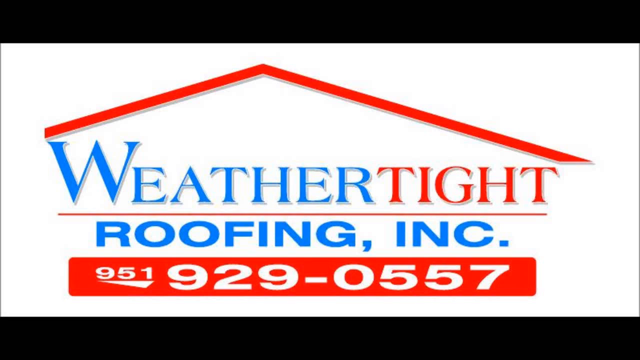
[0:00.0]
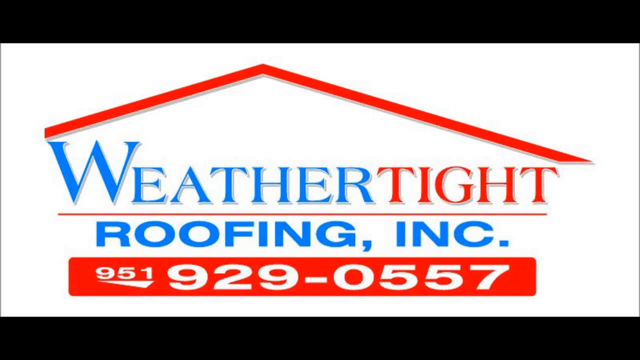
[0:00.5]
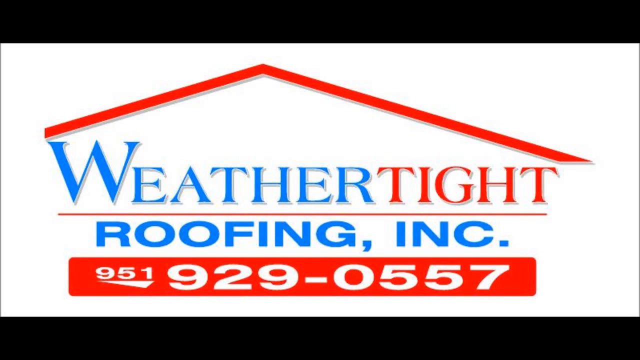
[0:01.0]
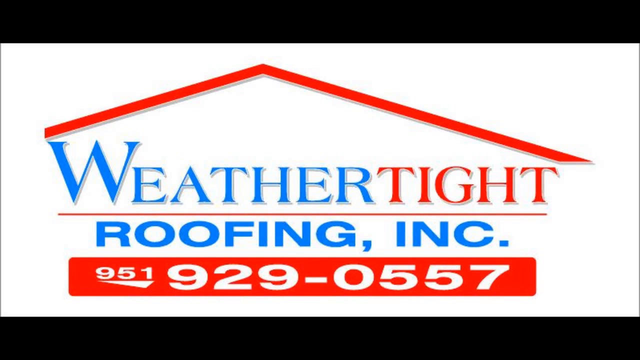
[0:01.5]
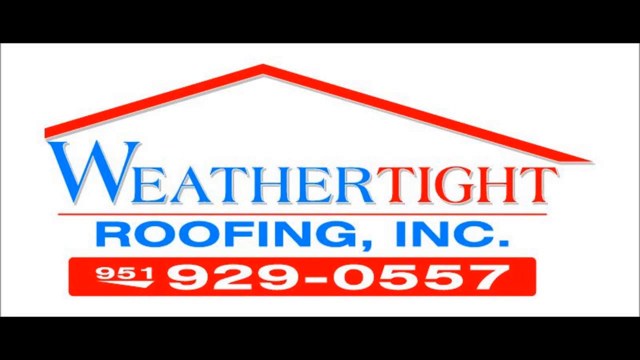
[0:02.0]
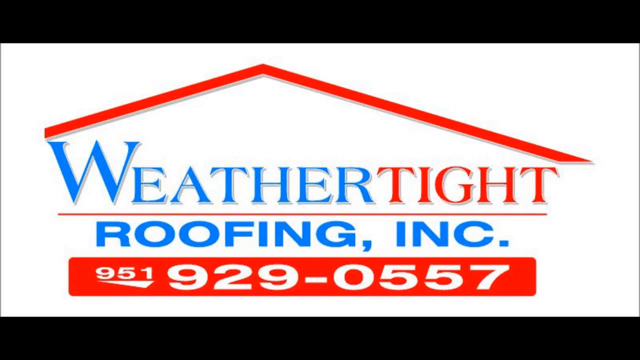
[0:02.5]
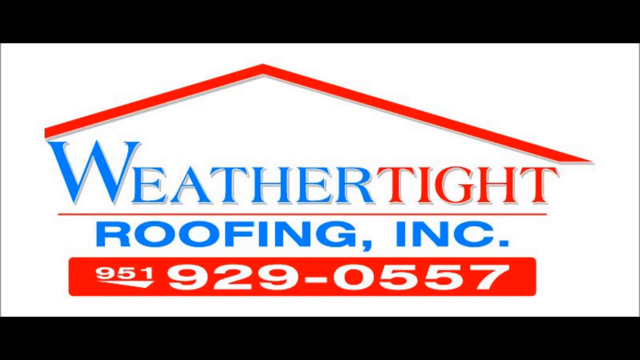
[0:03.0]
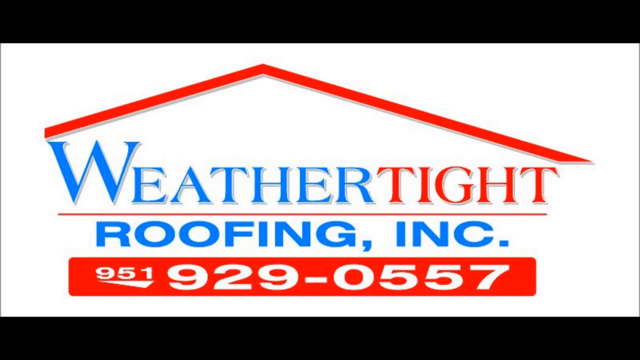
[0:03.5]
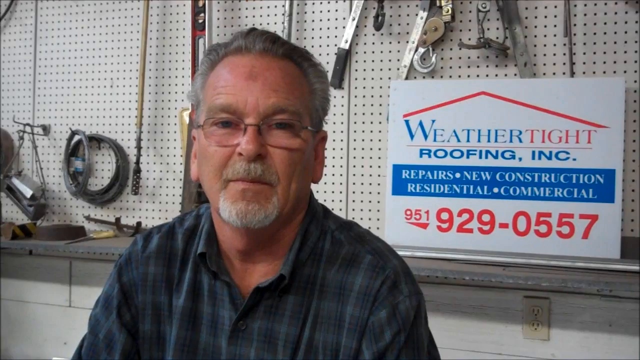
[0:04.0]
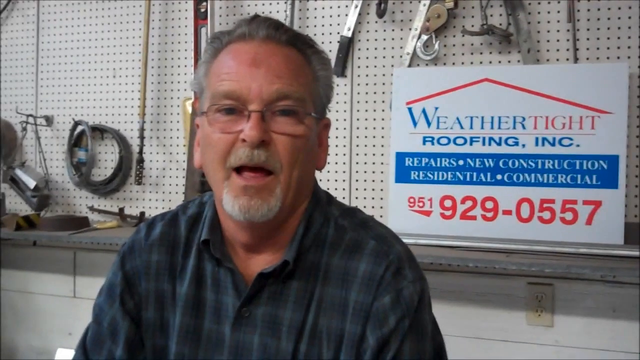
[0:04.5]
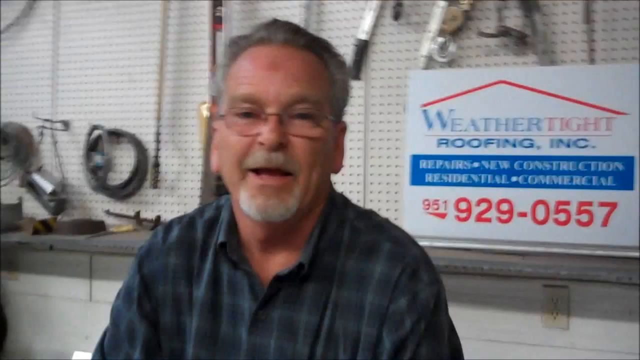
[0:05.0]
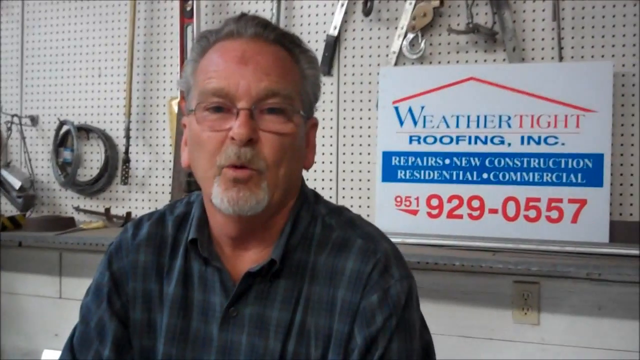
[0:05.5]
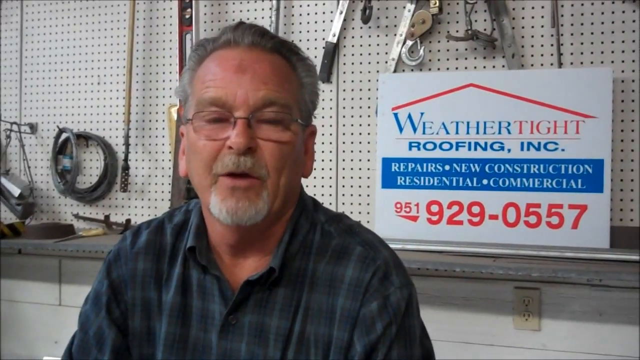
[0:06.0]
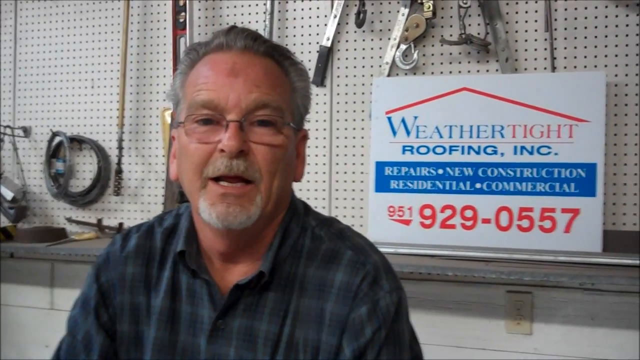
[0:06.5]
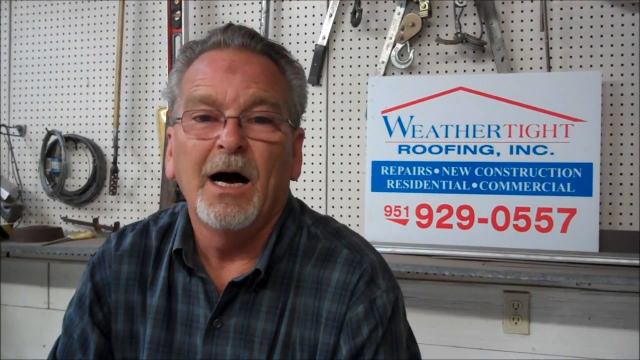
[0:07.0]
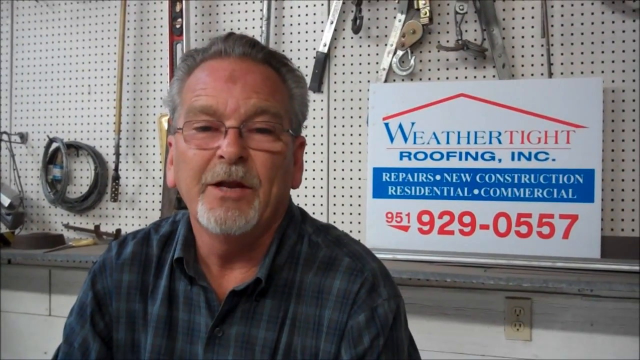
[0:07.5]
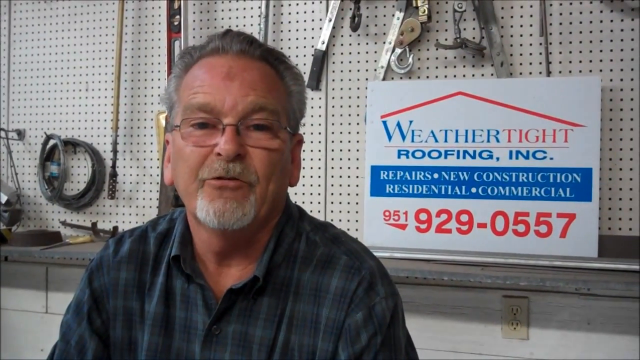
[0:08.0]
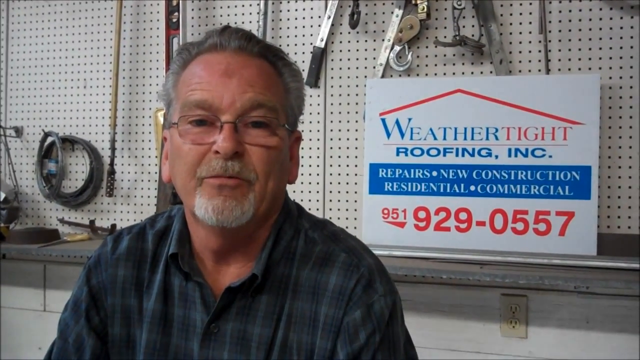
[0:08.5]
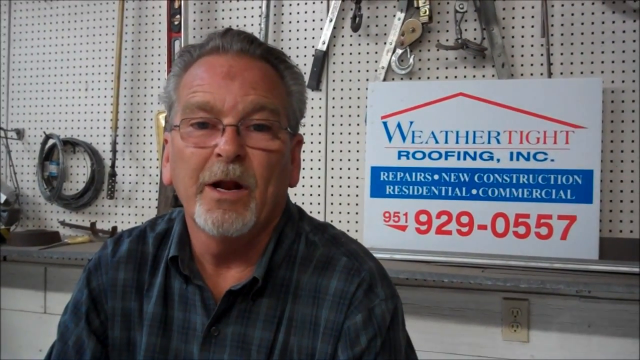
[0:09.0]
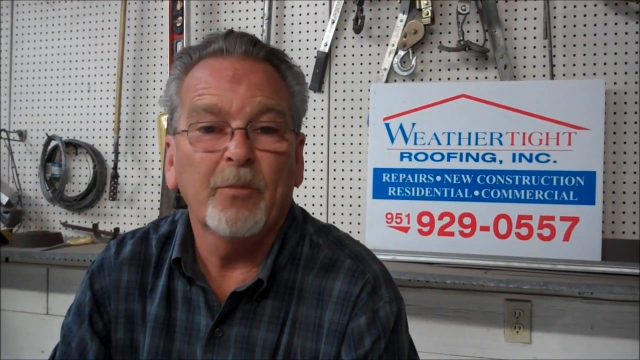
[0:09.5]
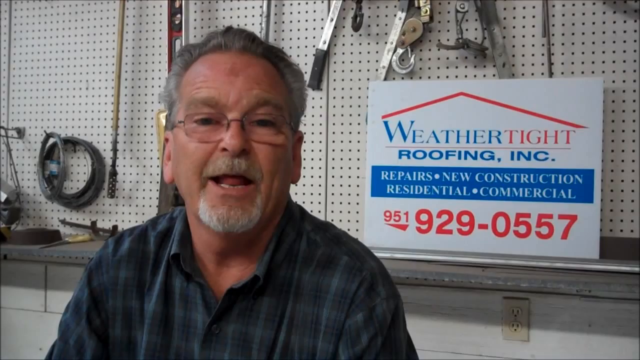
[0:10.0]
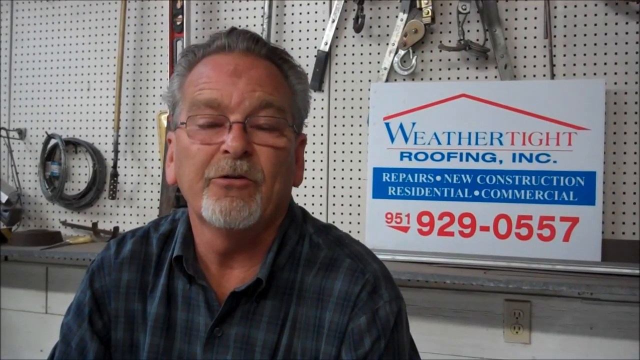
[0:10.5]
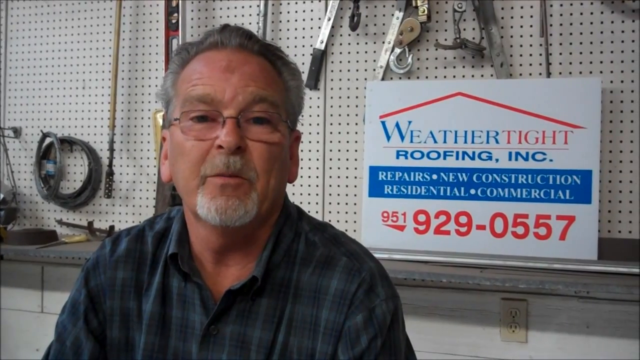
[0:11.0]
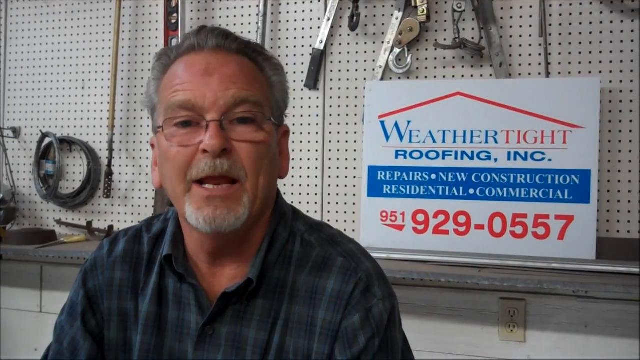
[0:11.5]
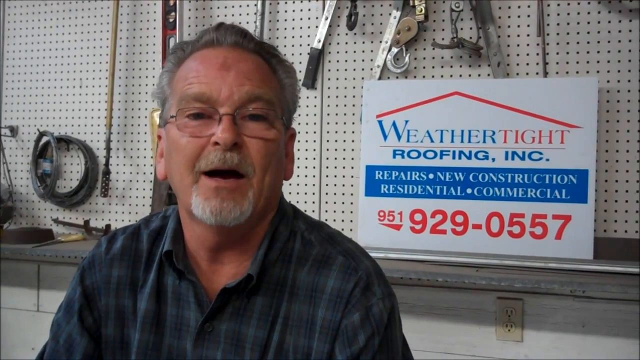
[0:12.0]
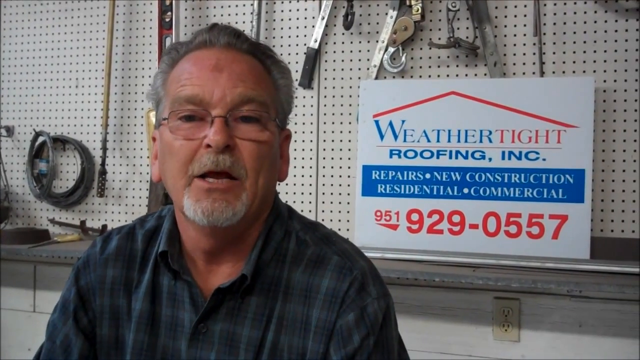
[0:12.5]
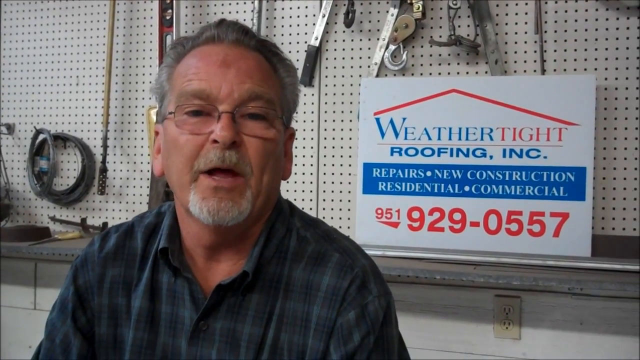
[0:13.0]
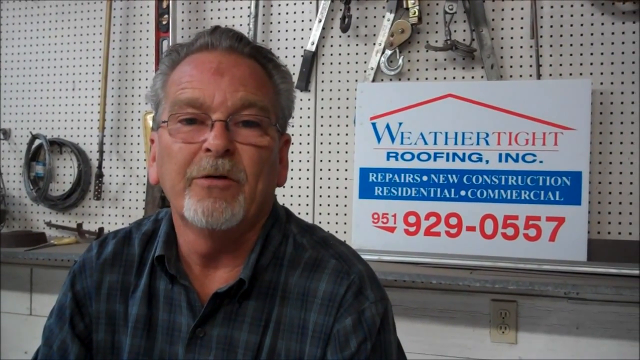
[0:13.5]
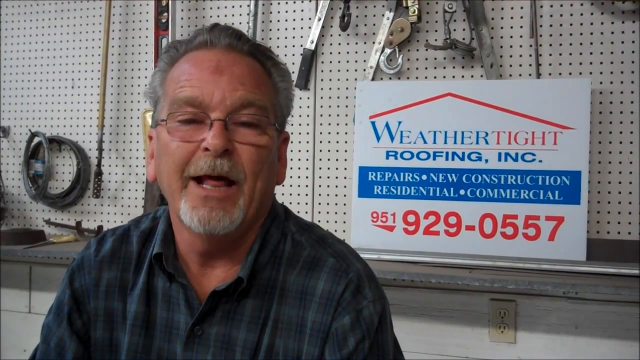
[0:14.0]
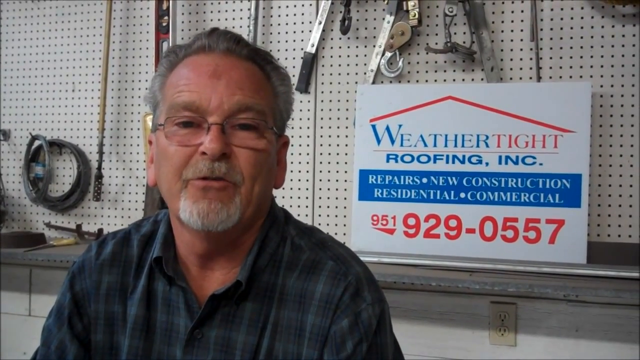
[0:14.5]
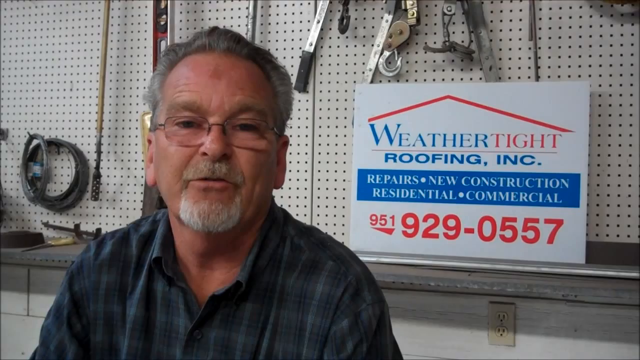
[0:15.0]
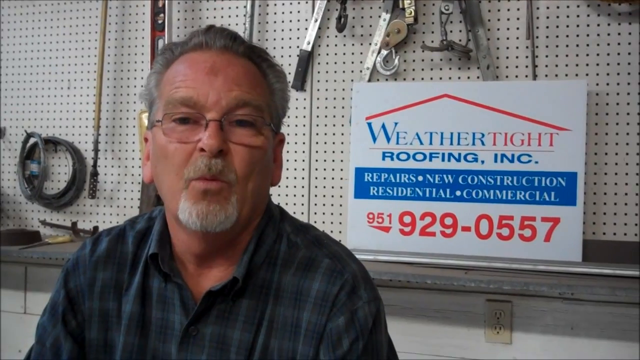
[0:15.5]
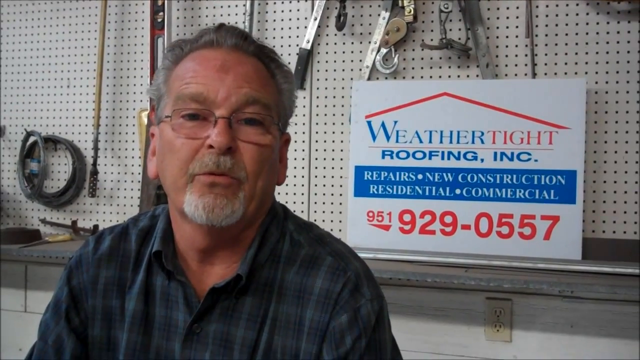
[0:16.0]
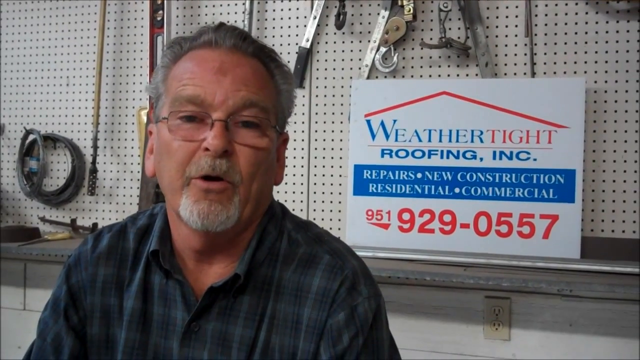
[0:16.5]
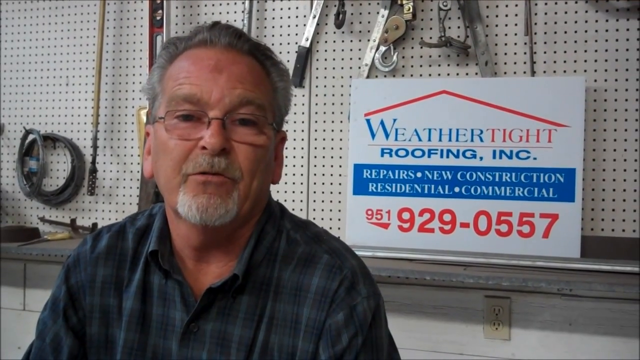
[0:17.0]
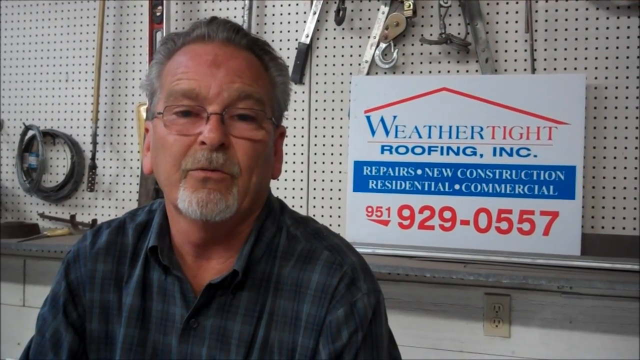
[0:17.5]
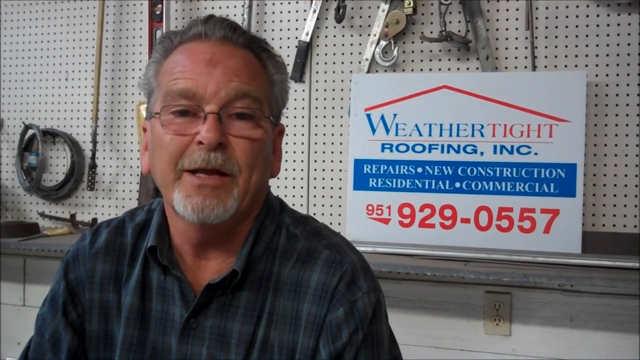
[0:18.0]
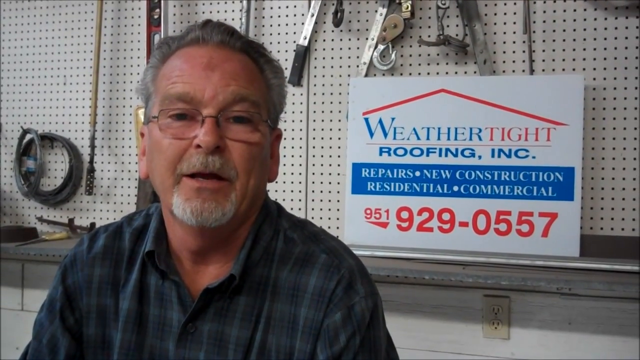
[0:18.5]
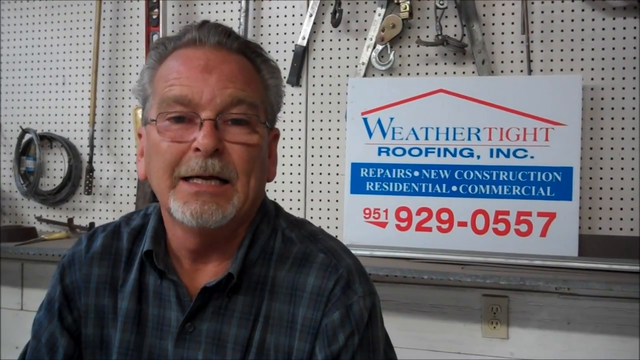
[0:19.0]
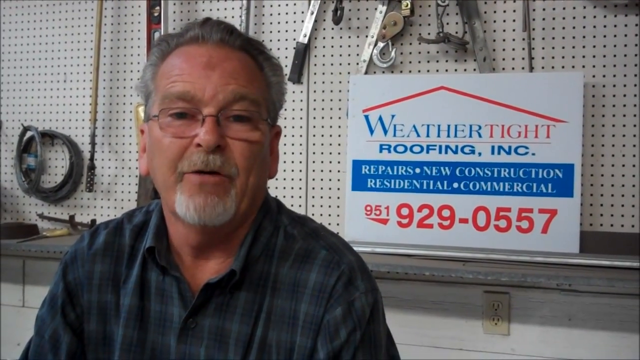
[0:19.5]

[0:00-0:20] The on-screen text reads "weather tight roofing, INC. 951929-0557", displayed under a red area that looks like a slanted roof at the top. A gentleman then comes into view. The camera is very unsteady, with a lot of movement. He faces the camera, his body turned at a slight diagonal toward his right. Behind him on the right side is a sign, and multiple silver objects hang down on a white board with a lot of holes. As he speaks, he moves his finger slightly toward the front. He wears glasses and a blue shirt with some checks in it. The backdrop behind his shoulders and arms is gray, with a darker gray and then a lighter gray line visible on the left side, about an inch, running toward the right side of his arm. He has silverish-white gray hair and a mustache.